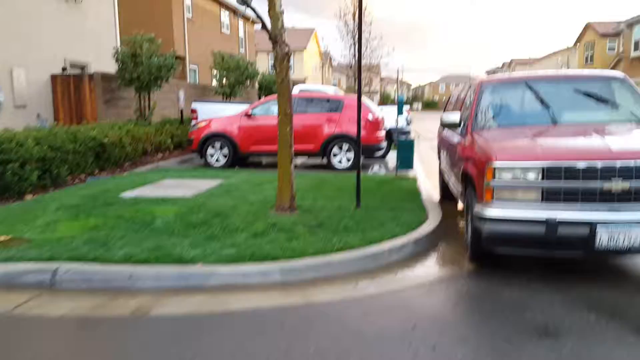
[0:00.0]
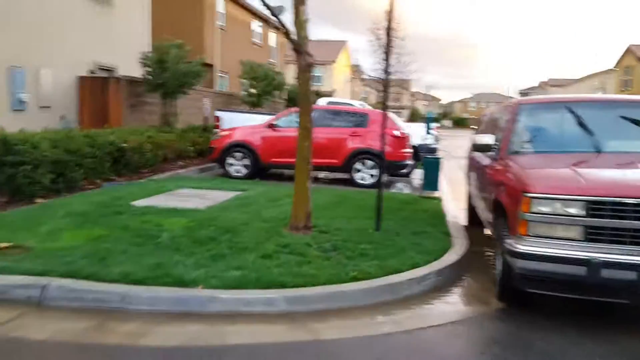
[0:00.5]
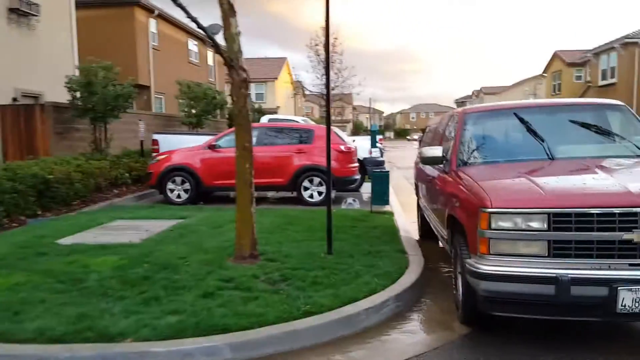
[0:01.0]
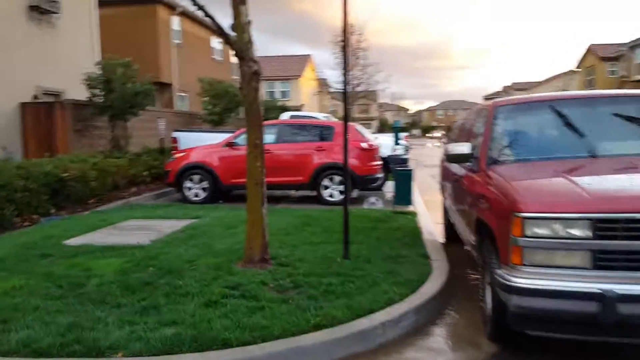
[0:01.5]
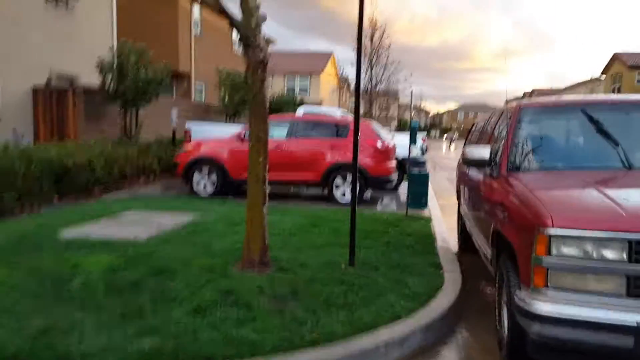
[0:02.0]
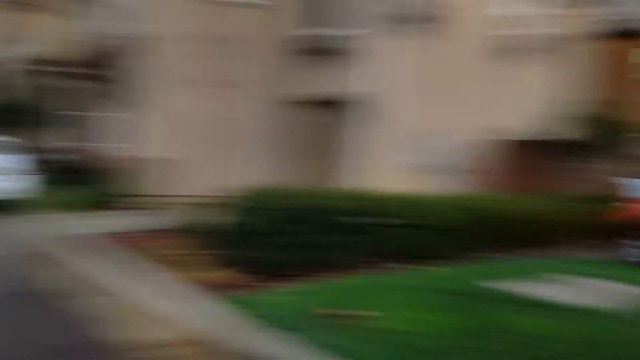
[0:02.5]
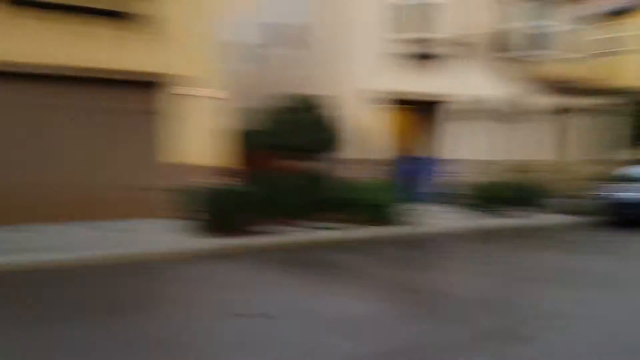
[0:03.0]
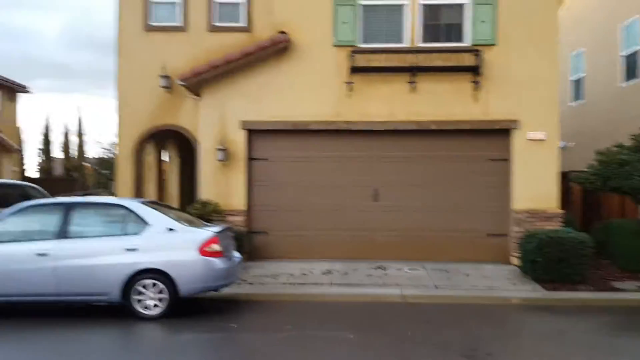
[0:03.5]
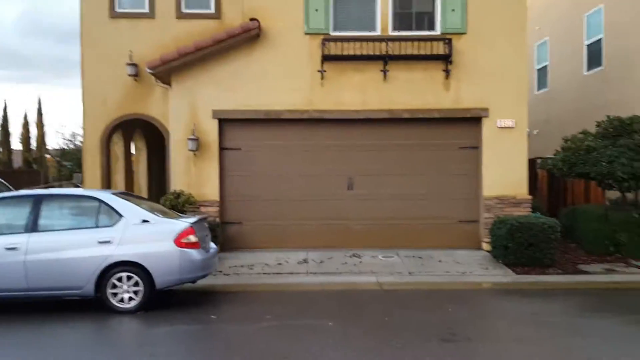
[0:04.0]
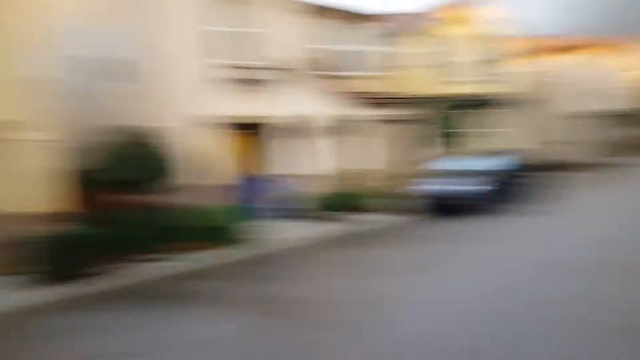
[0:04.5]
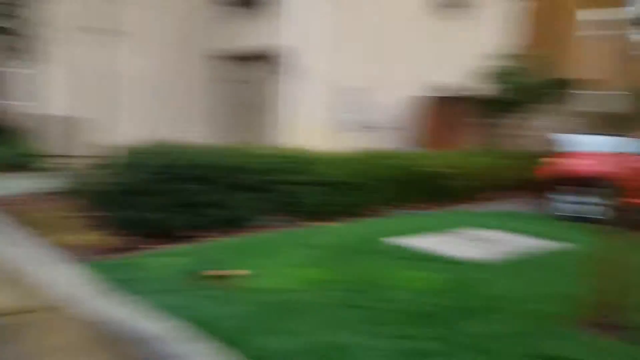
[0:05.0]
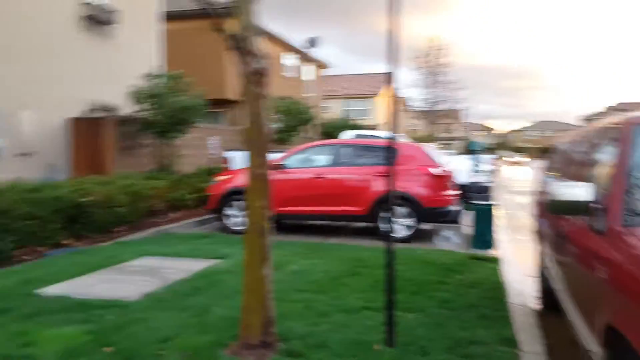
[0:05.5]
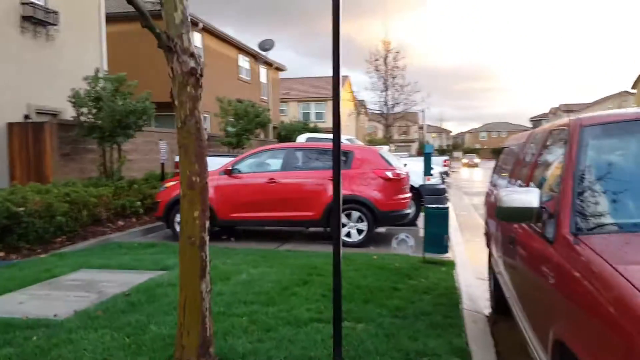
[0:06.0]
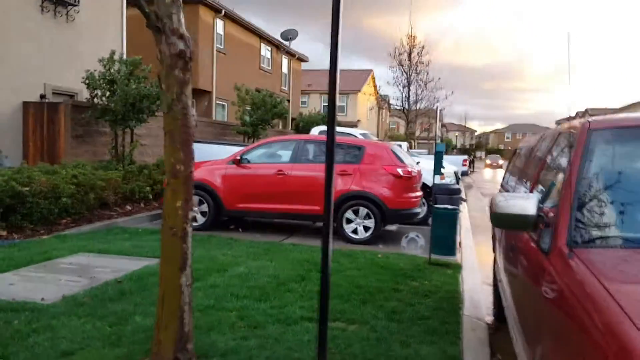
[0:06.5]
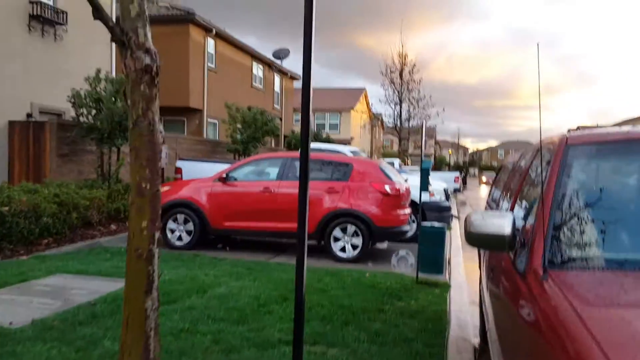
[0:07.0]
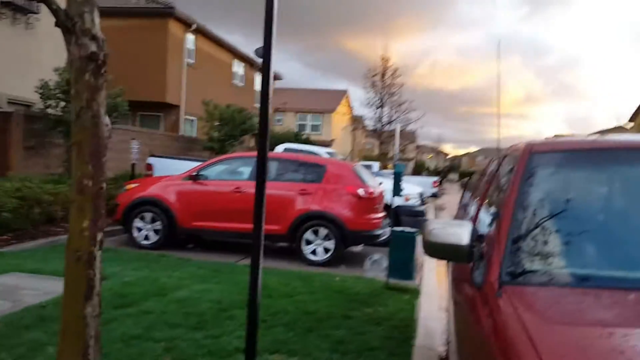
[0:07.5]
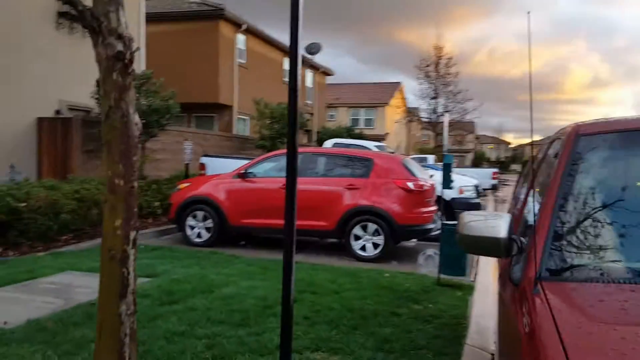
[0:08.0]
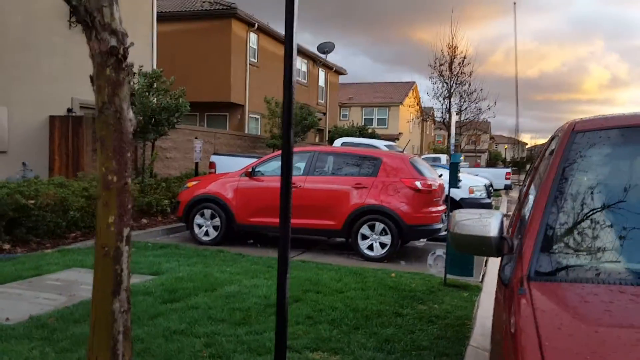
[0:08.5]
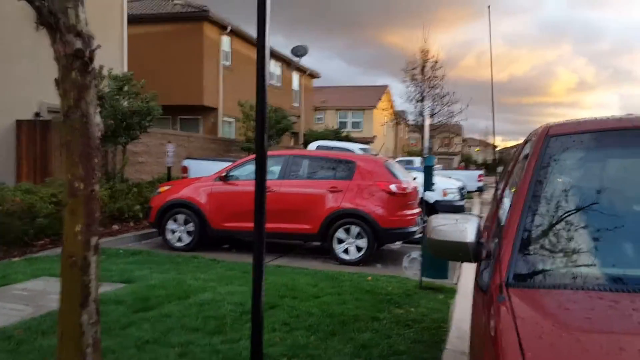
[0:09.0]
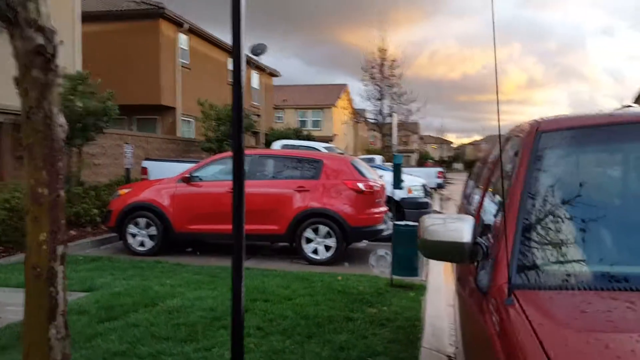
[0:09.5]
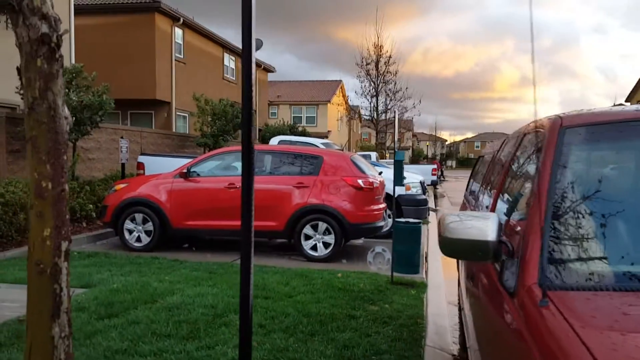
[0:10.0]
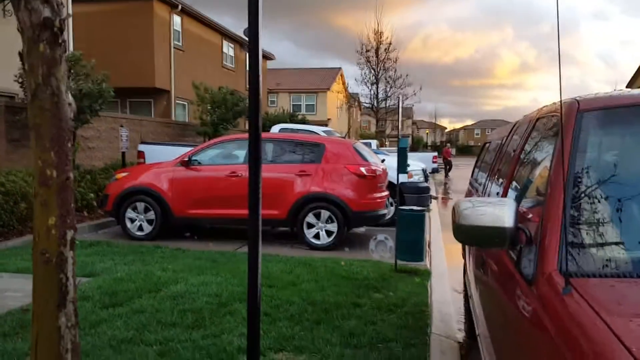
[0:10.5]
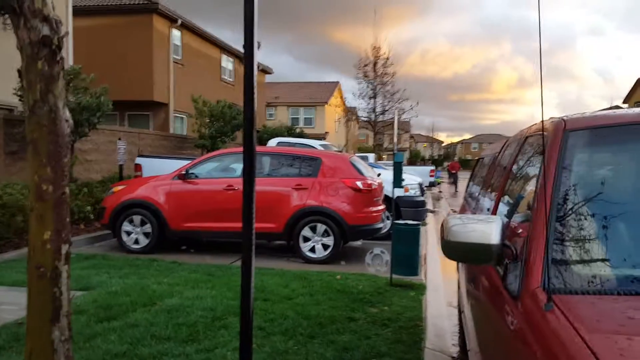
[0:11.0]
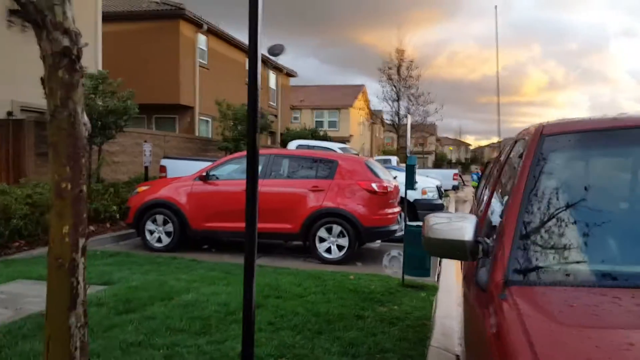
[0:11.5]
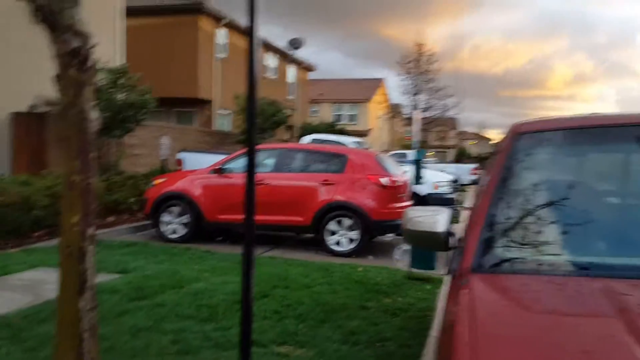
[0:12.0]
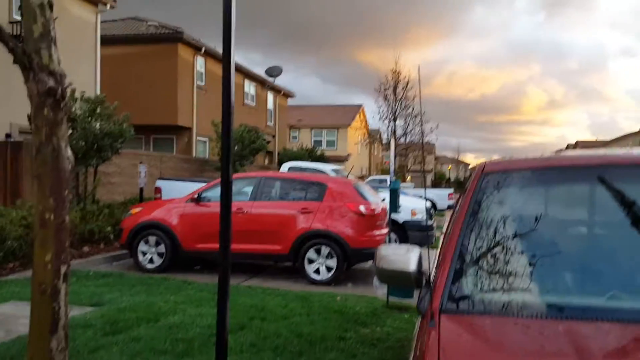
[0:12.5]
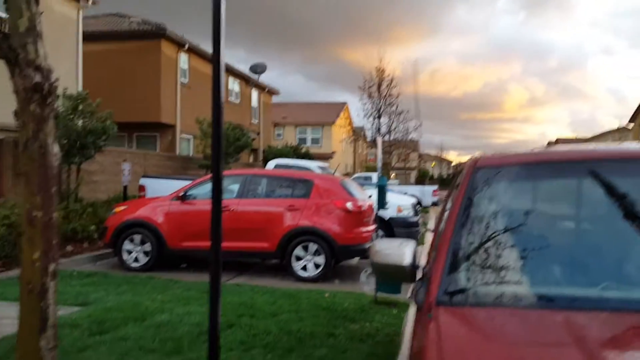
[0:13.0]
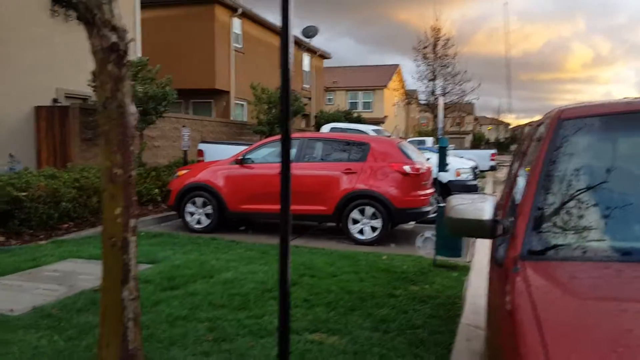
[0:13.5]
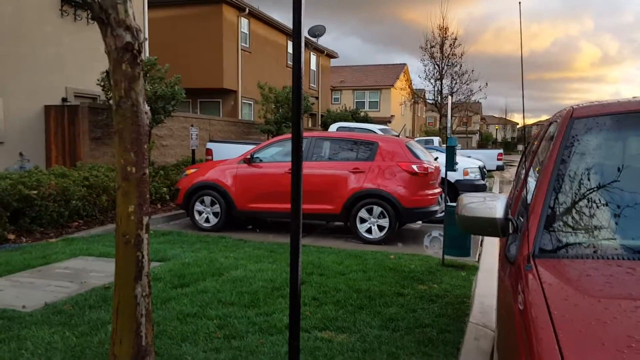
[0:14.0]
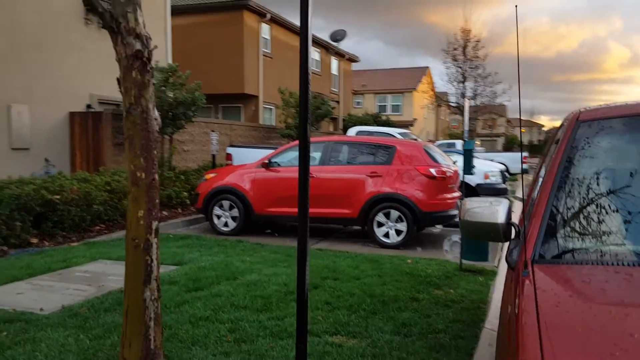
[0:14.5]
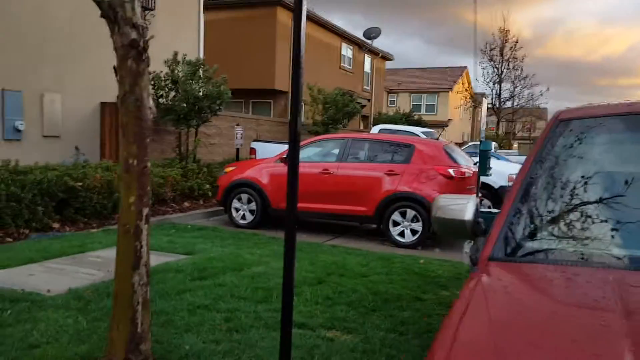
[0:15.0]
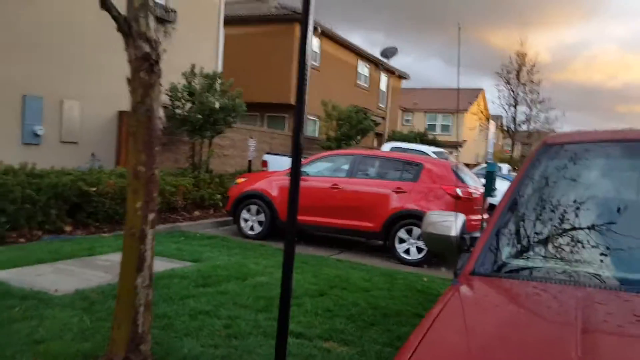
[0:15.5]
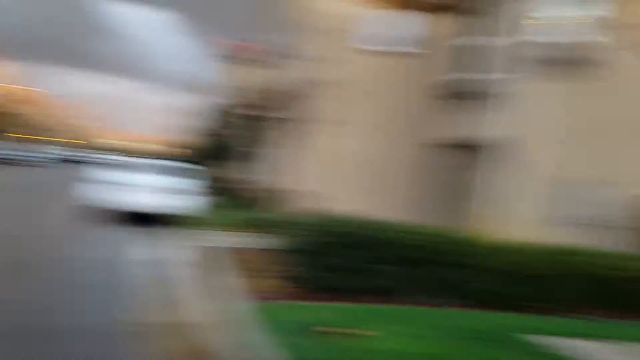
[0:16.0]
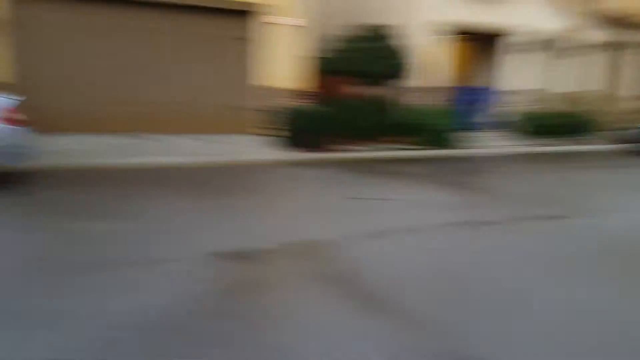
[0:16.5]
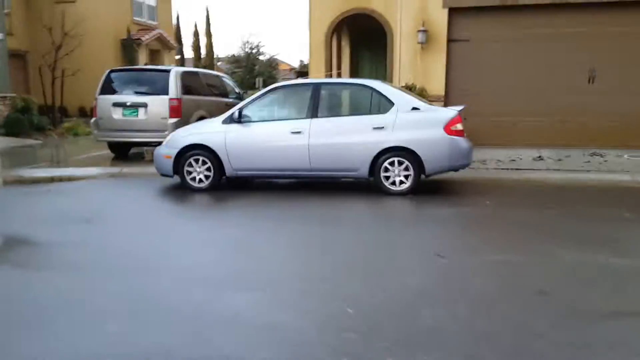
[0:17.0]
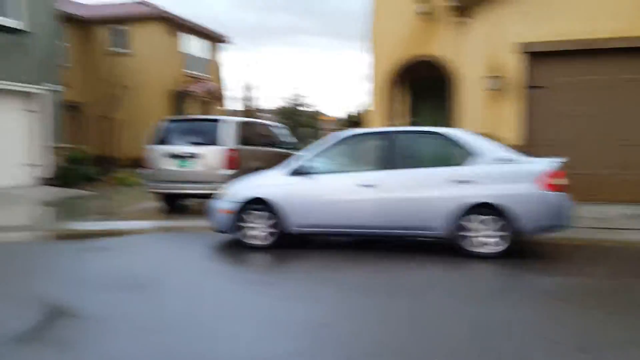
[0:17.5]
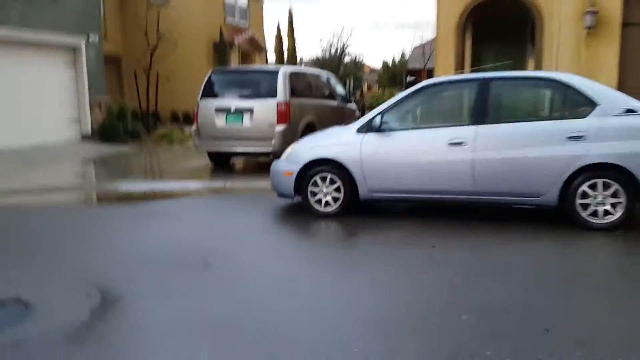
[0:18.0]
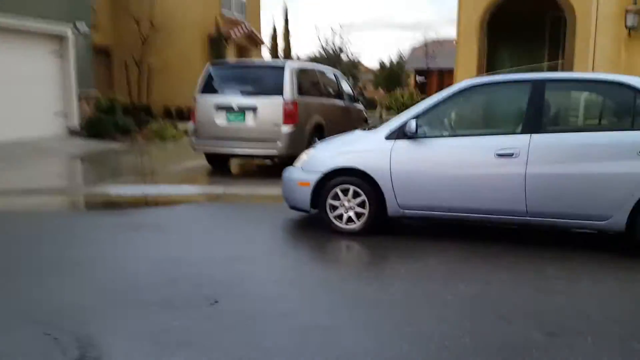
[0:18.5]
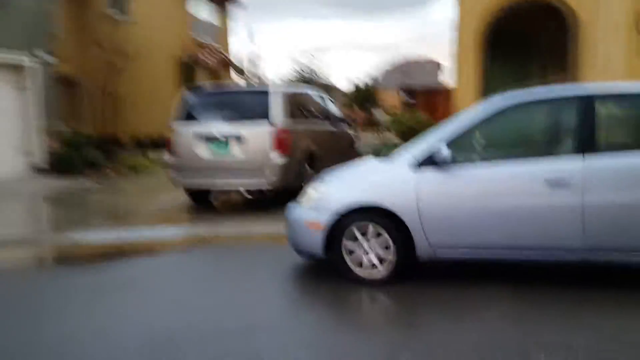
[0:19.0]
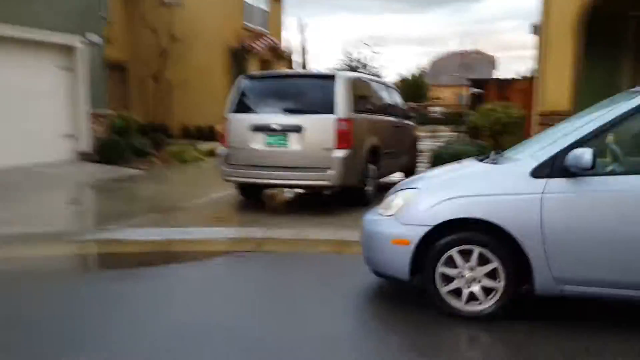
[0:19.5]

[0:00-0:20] The footage is quite shaky, with the camera apparently handheld. It first shows what seems to be a private neighborhood where the houses are mostly yellow or brown or shades of those colors. A burgundy Chevrolet pickup truck is parked on the side of the street, while a red SUV is parked on the driveway. The camera spins around to show the garage of a yellow house and a grey car parked on the side of its street, then turns around again to the red cars. In the background some people walk by. The camera turns back once more, and the person holding it starts walking toward an SUV parked on a driveway.